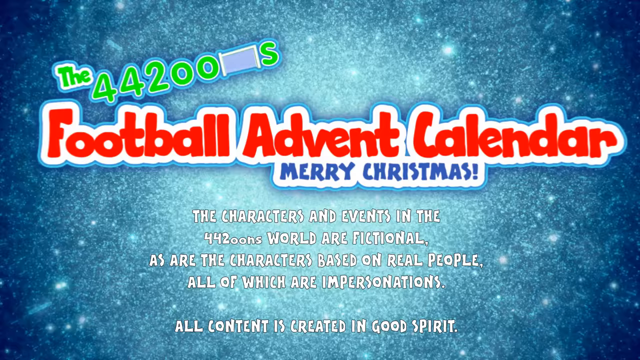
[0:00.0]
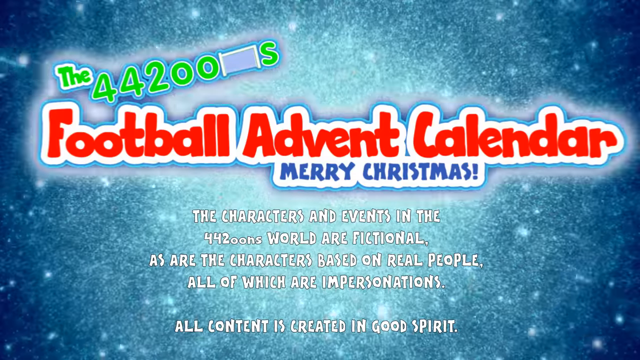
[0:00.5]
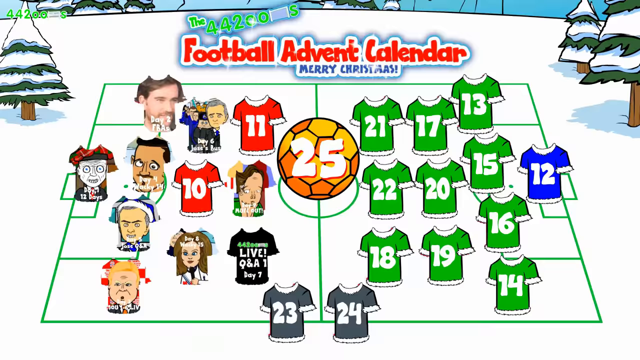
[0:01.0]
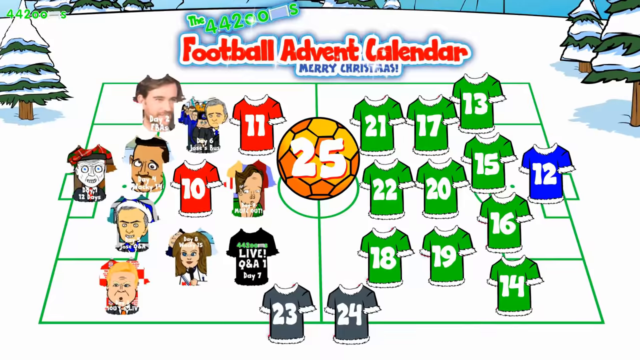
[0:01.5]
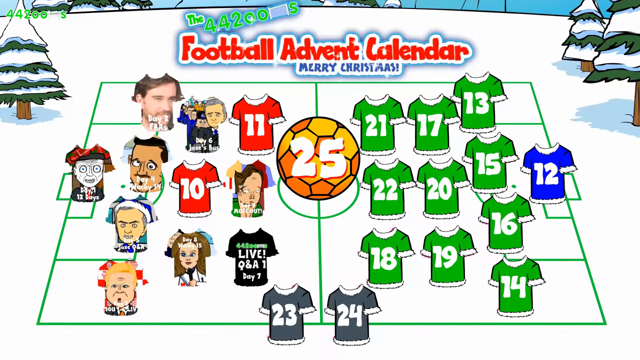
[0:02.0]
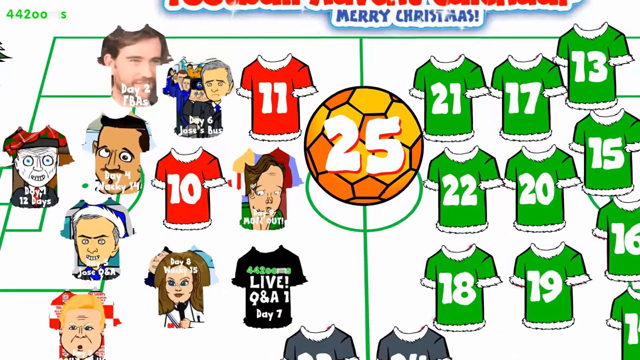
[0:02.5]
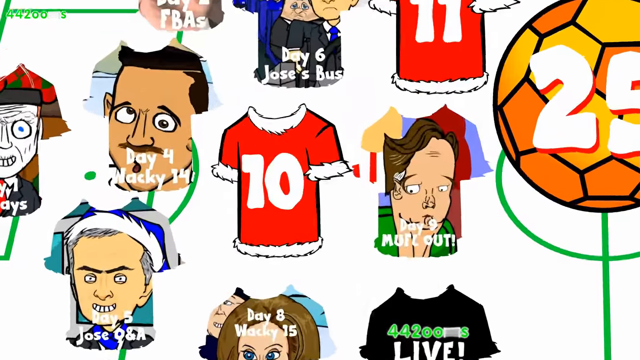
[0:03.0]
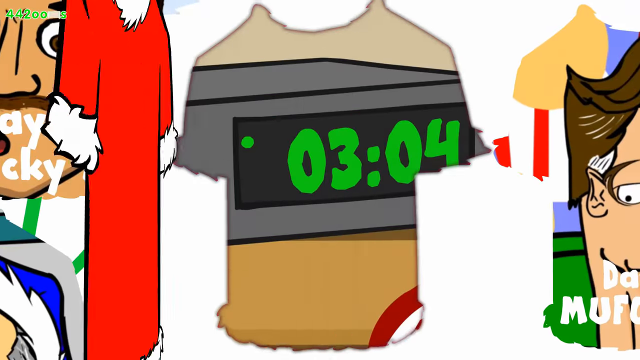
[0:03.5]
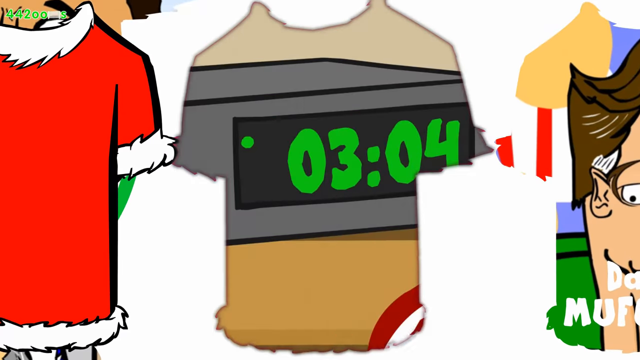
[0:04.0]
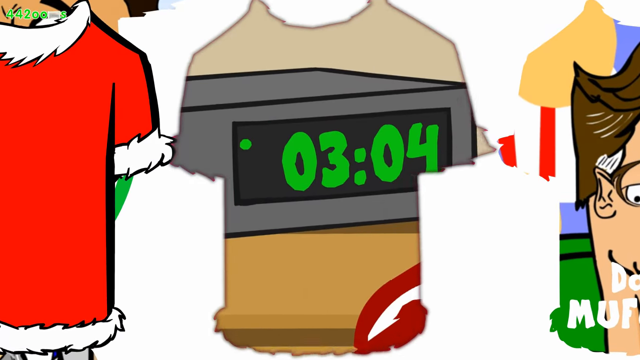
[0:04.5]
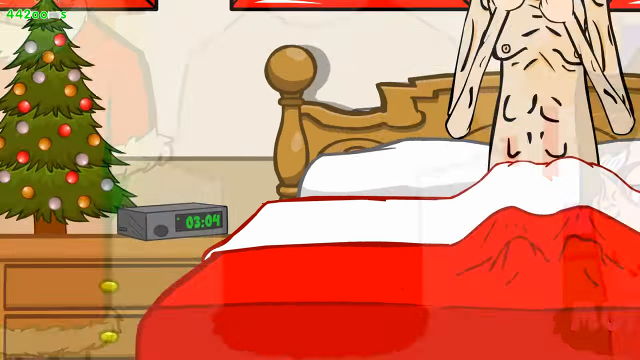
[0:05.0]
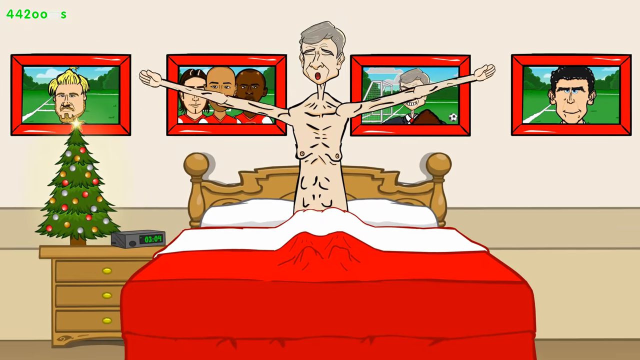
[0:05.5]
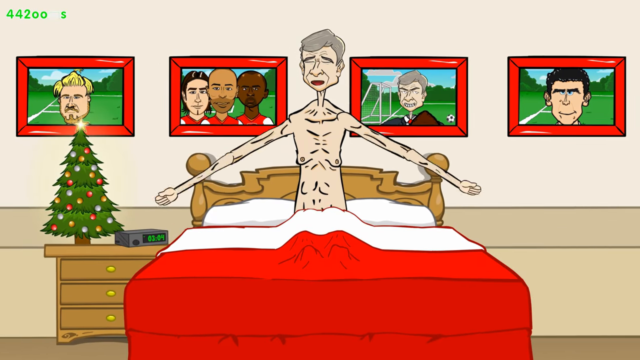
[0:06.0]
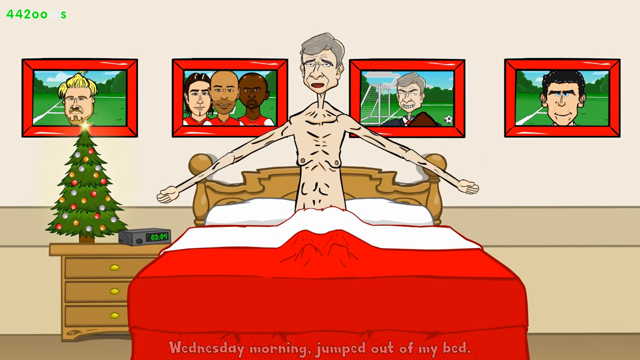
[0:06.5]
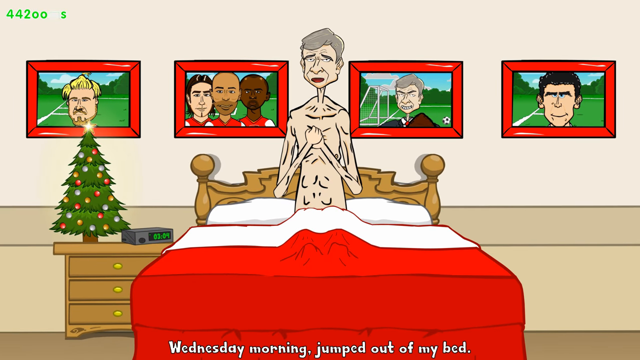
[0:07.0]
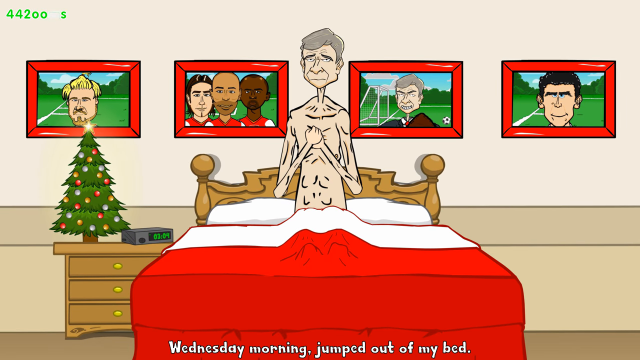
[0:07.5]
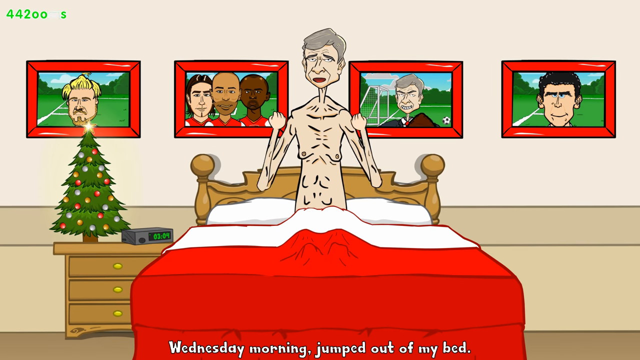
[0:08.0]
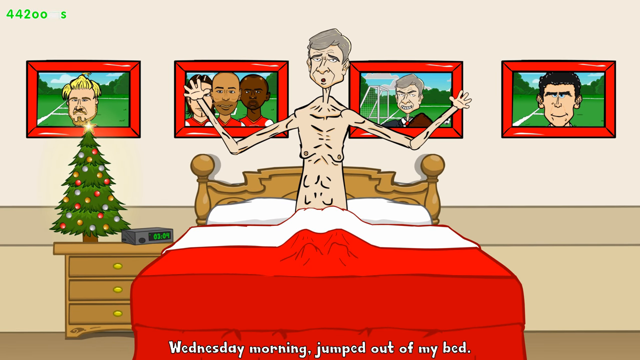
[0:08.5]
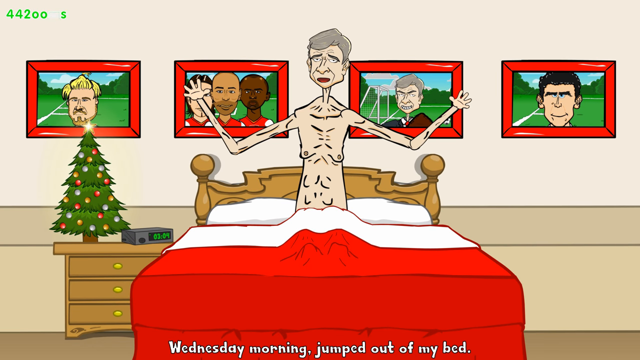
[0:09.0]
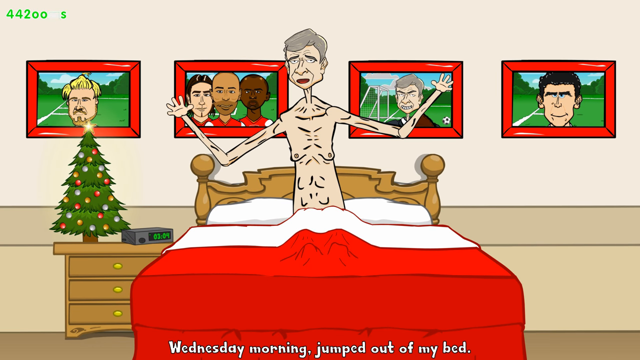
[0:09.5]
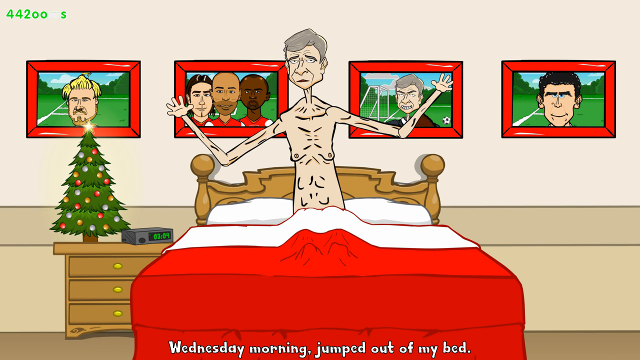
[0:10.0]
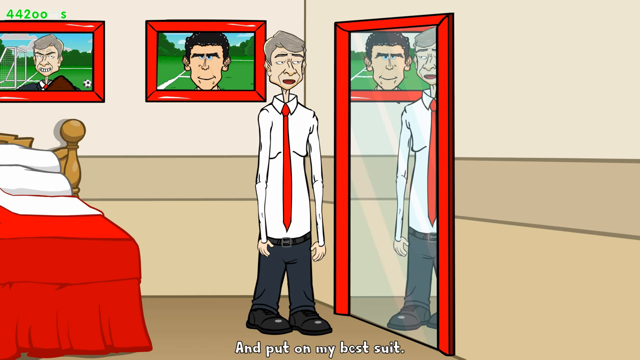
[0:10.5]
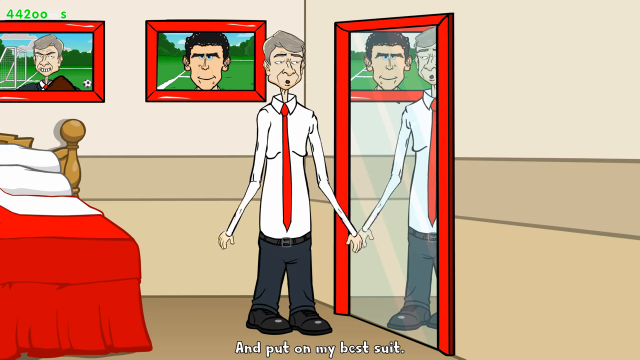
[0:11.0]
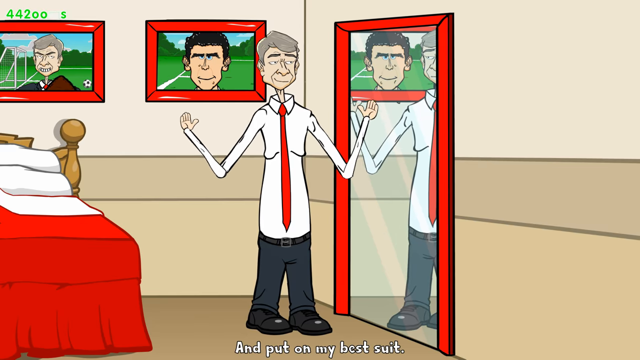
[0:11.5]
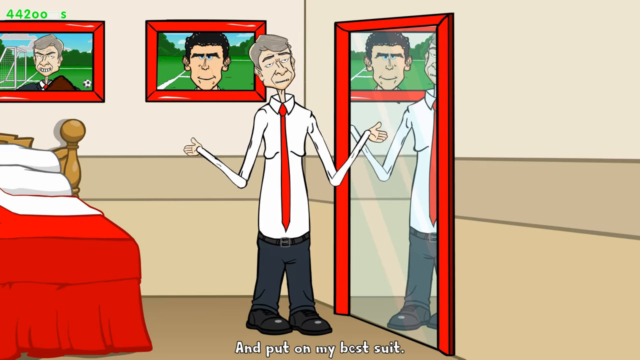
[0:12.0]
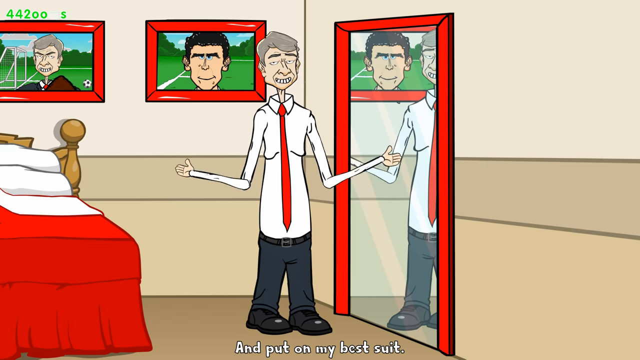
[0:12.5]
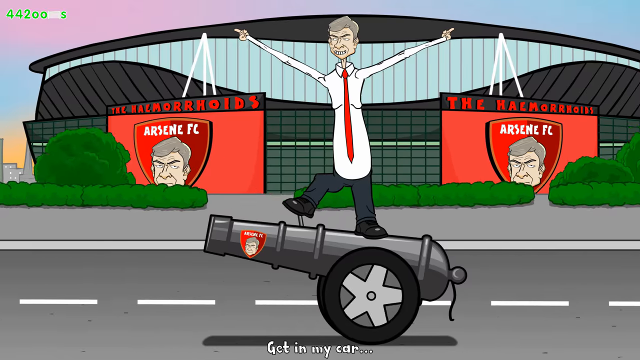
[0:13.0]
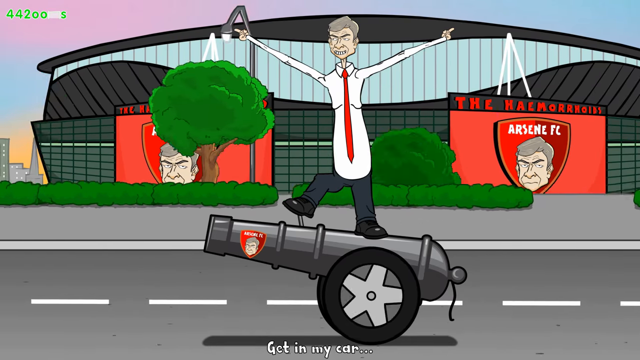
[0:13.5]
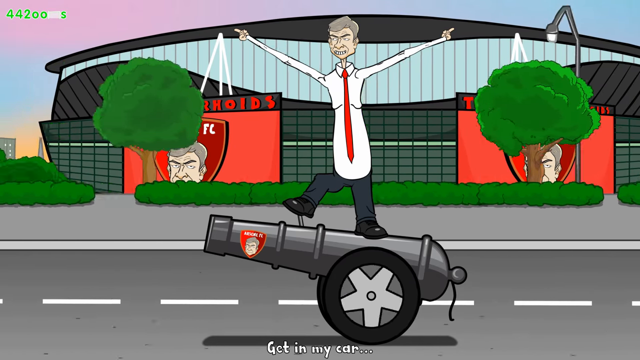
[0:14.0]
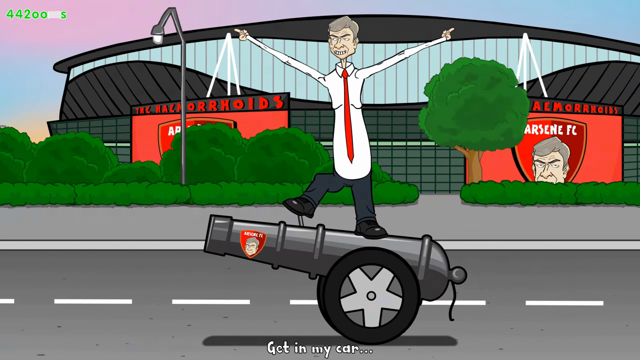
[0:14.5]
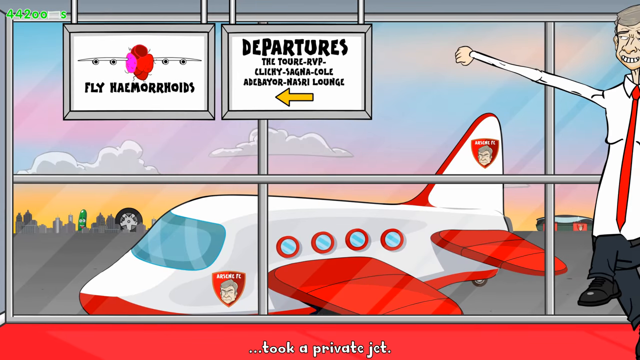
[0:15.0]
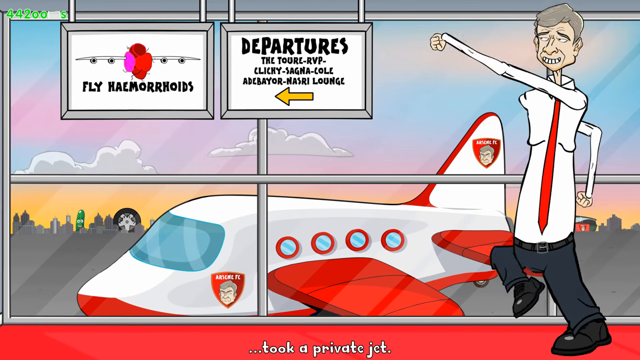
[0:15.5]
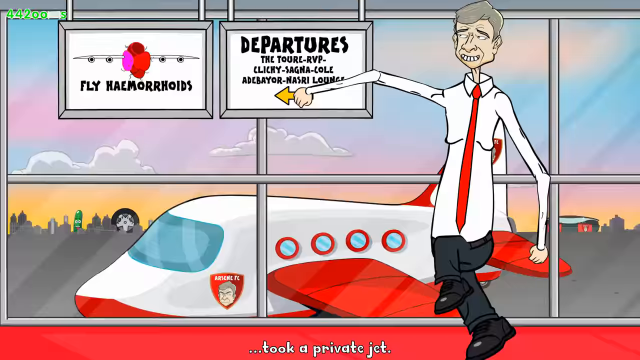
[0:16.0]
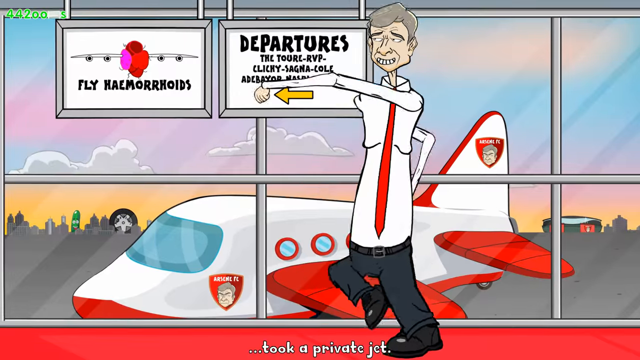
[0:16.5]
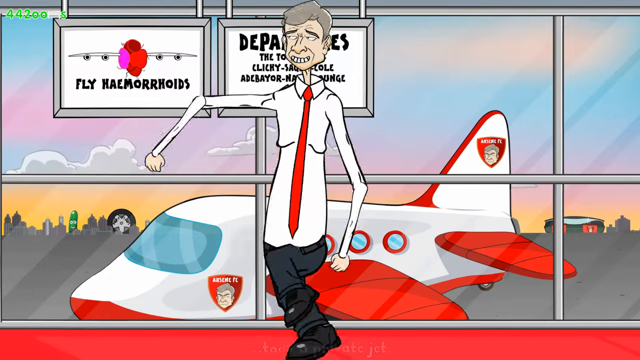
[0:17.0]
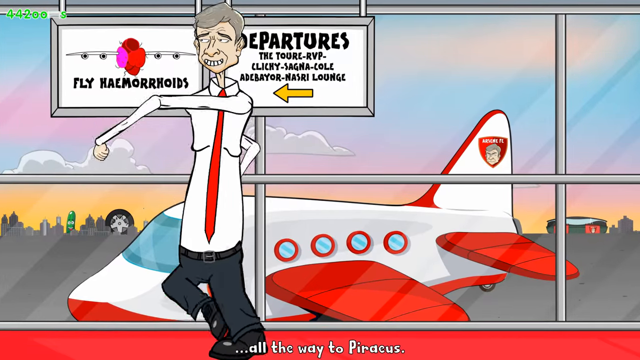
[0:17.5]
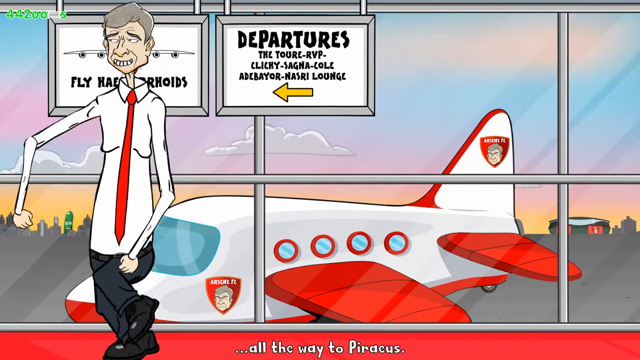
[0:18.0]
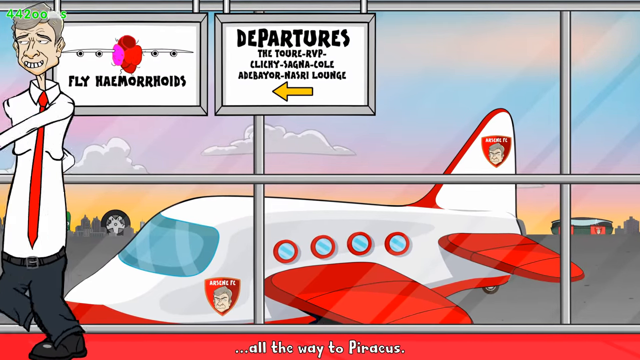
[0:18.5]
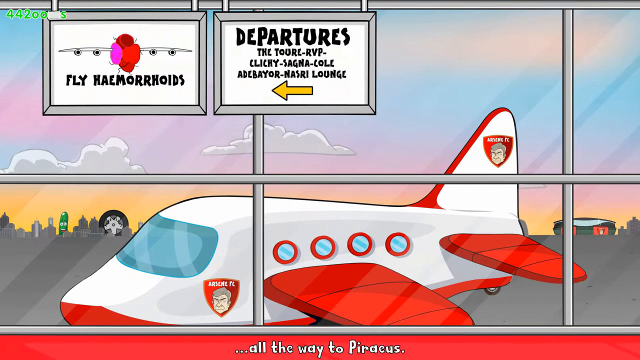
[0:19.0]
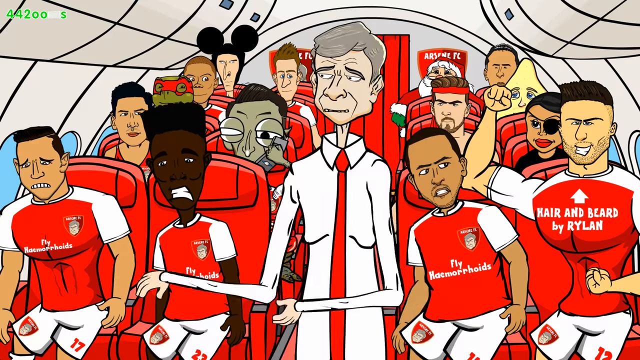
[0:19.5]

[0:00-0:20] The cartoon video opens with a screen that reads "the 442OO's football advent calendar, Merry Christmas." A large disclaimer follows on the front page: "The characters and events in the 442OO's world are fictional, as are the characters based on real people, all of which are impersonations. All content is created in good spirit." Next comes a picture of the different faces of the players on the left side, apparently for some sort of soccer match. The cartoon itself starts with a very skinny, older man in bed getting up. Full of himself, he marches through the airport, then lectures his soccer team aboard a plane headed to a football match. He is the coach: very thin, wearing a tie, with long arms and long legs.